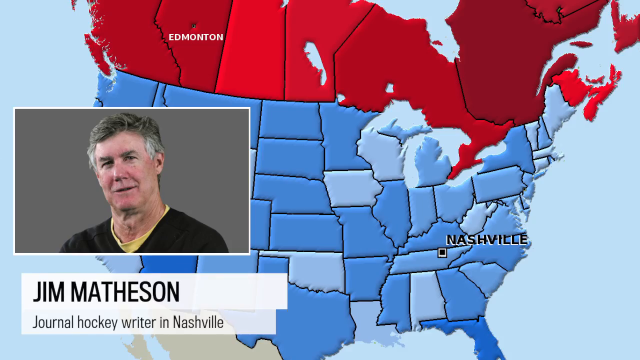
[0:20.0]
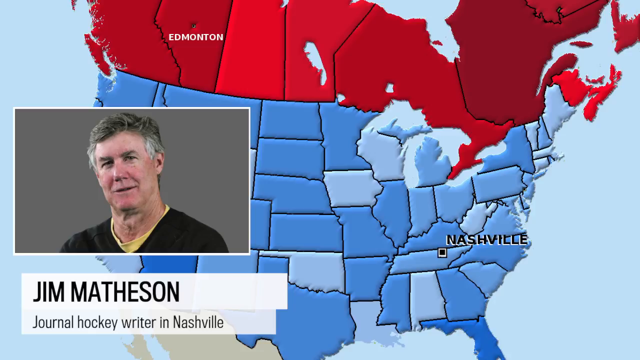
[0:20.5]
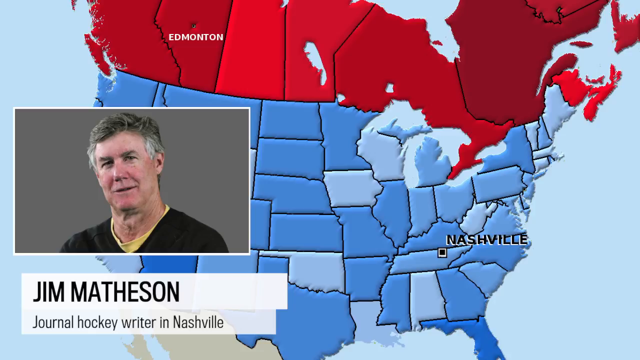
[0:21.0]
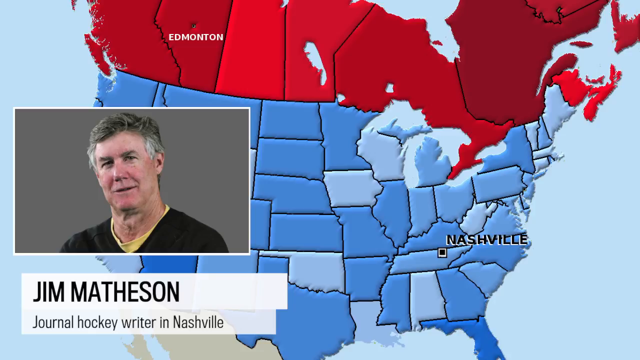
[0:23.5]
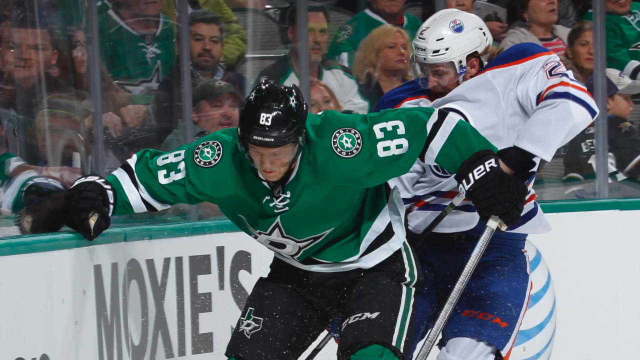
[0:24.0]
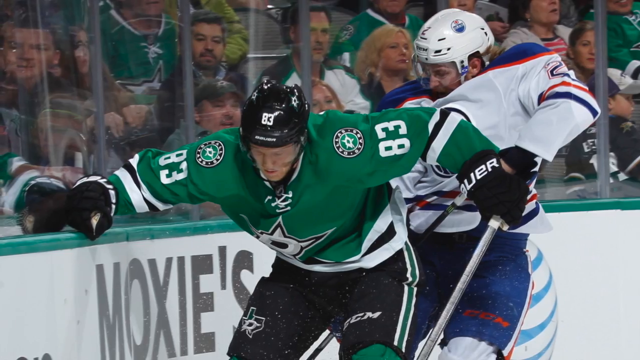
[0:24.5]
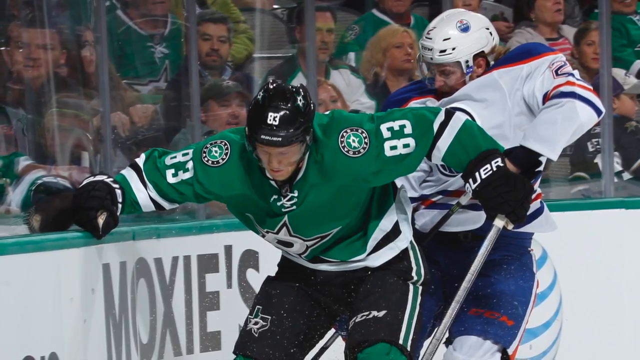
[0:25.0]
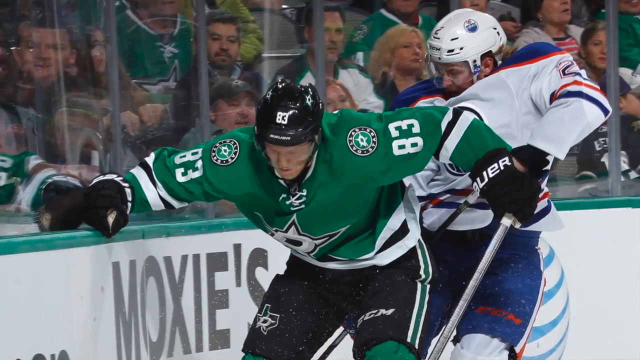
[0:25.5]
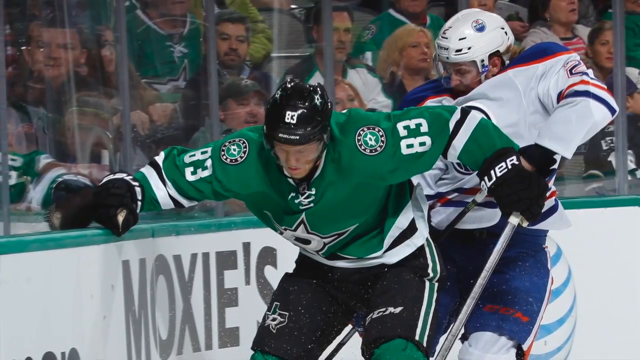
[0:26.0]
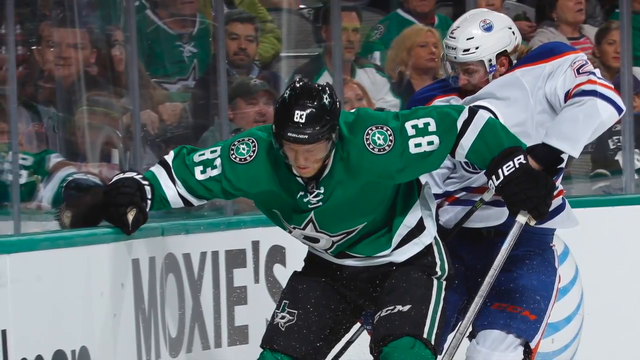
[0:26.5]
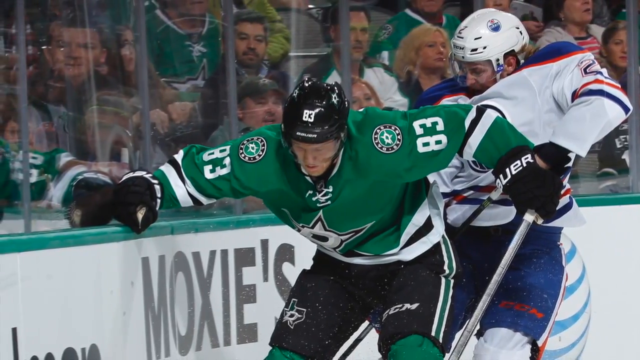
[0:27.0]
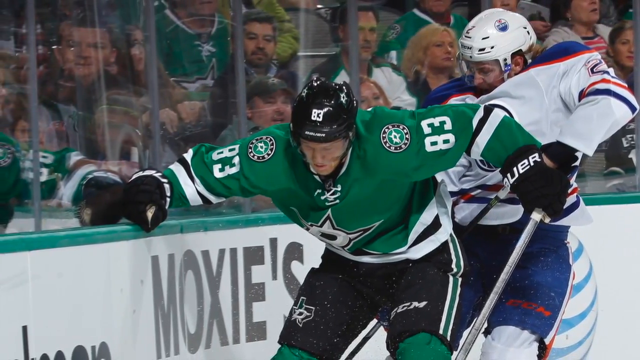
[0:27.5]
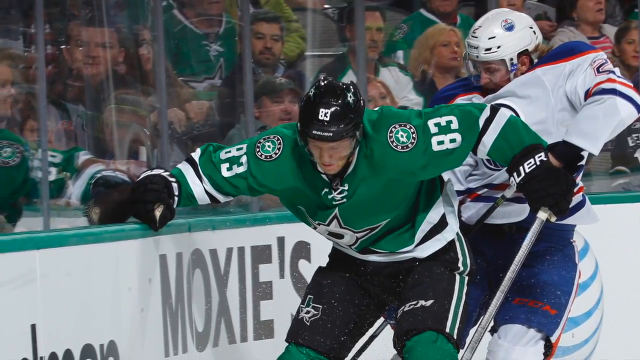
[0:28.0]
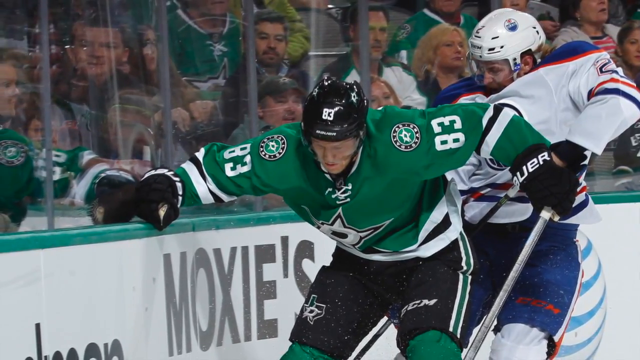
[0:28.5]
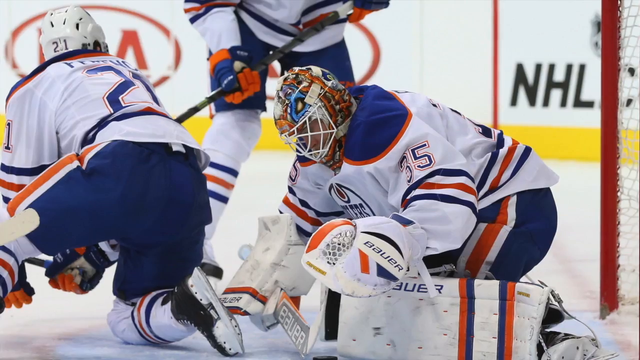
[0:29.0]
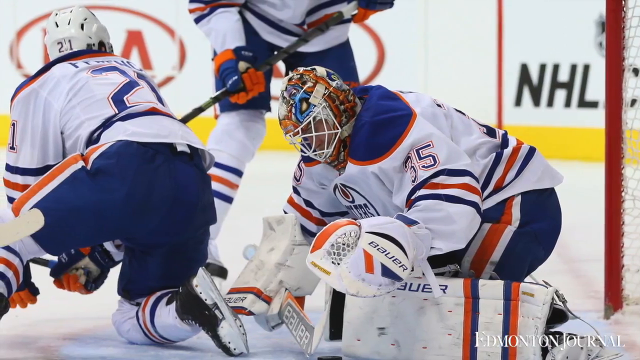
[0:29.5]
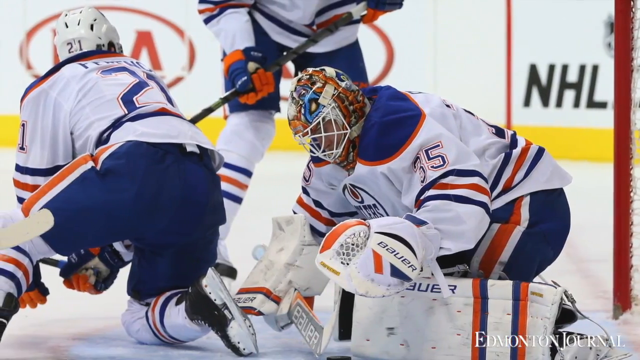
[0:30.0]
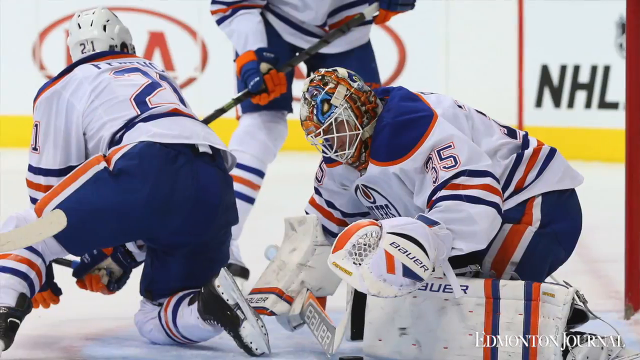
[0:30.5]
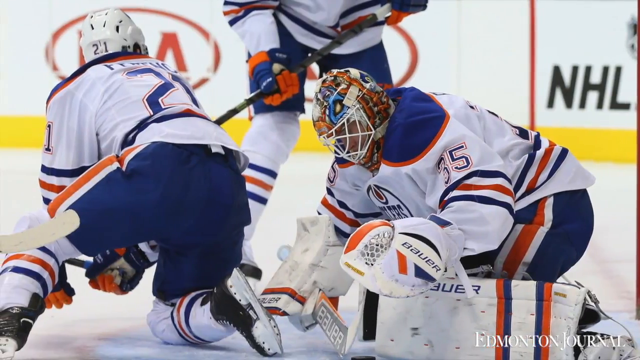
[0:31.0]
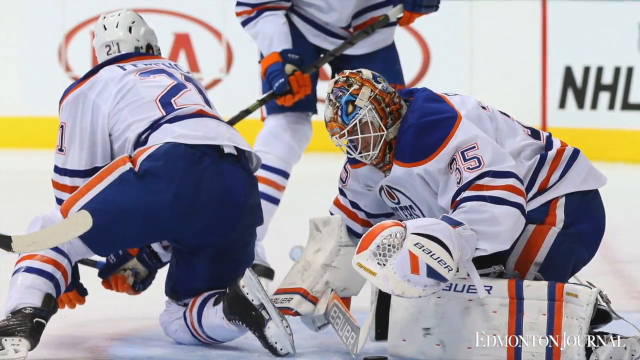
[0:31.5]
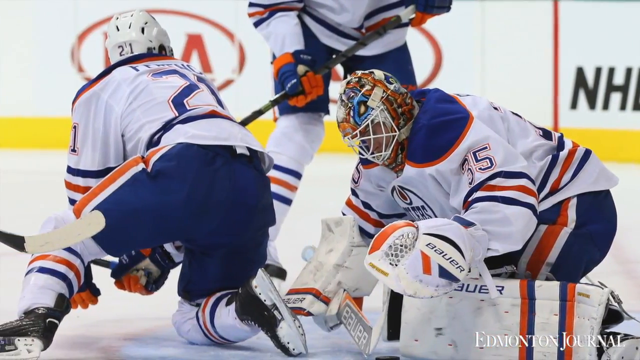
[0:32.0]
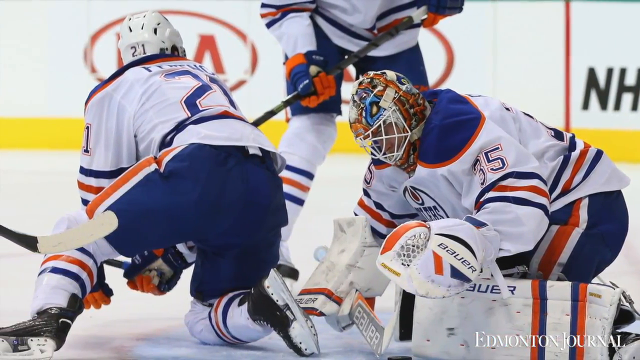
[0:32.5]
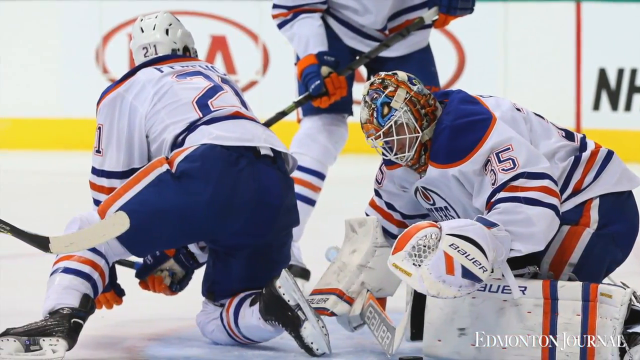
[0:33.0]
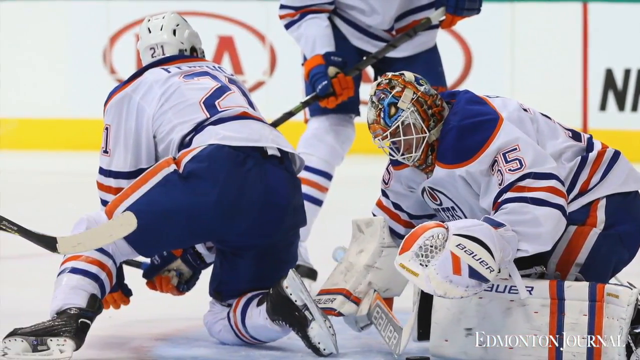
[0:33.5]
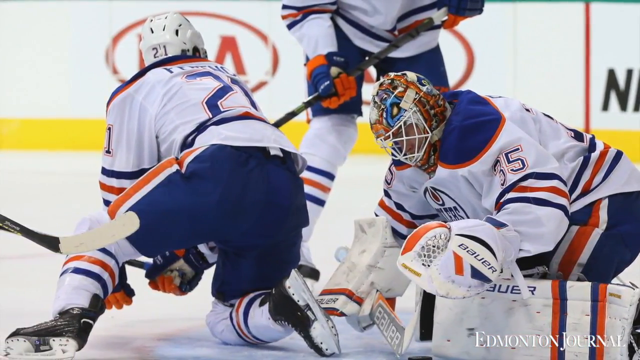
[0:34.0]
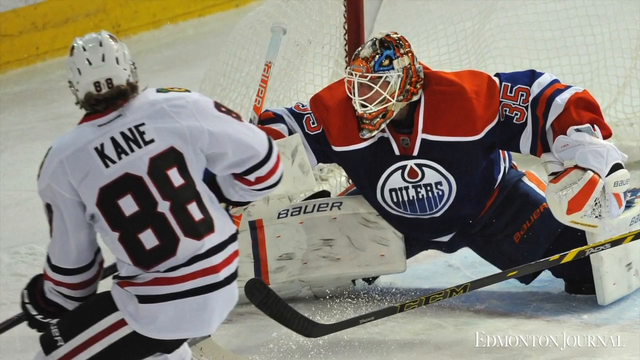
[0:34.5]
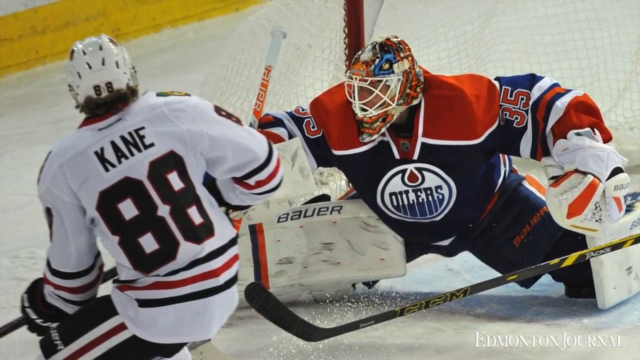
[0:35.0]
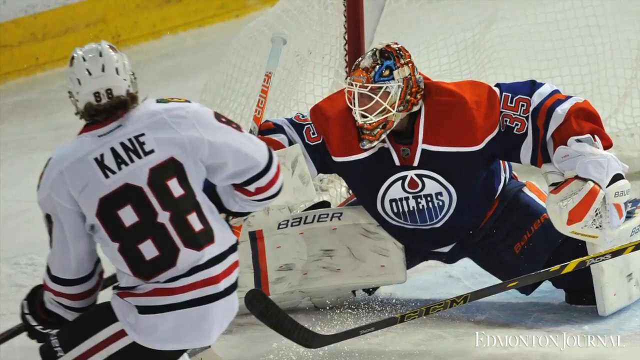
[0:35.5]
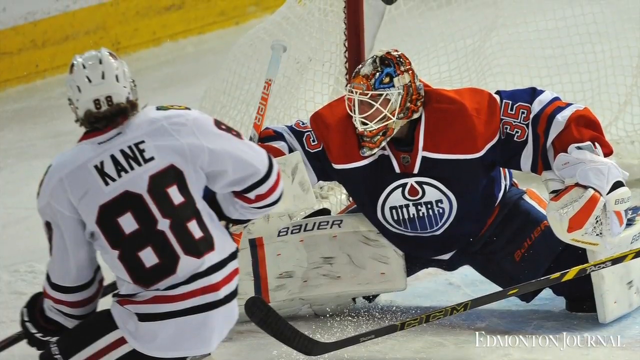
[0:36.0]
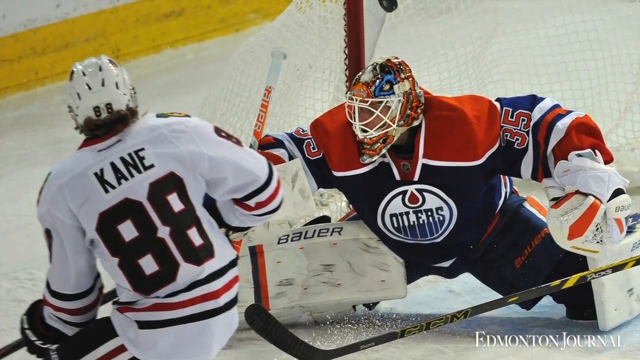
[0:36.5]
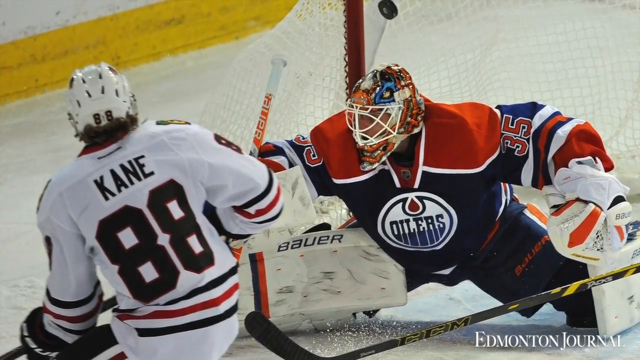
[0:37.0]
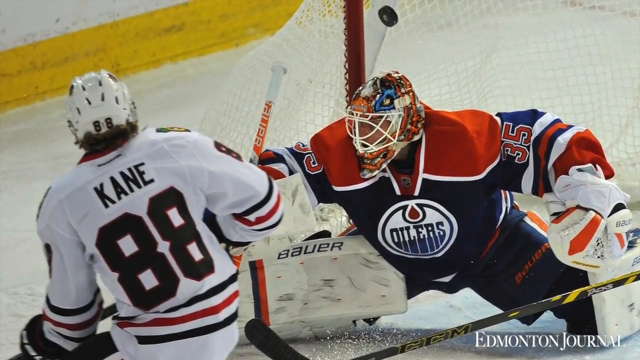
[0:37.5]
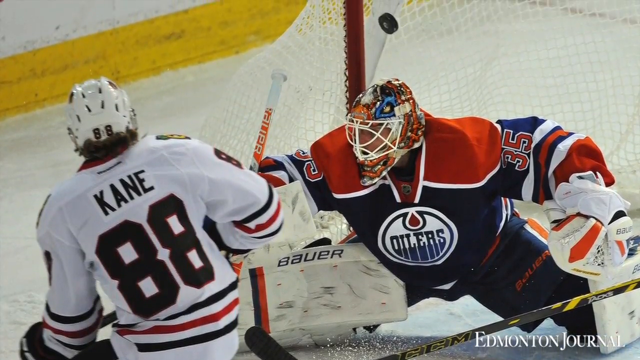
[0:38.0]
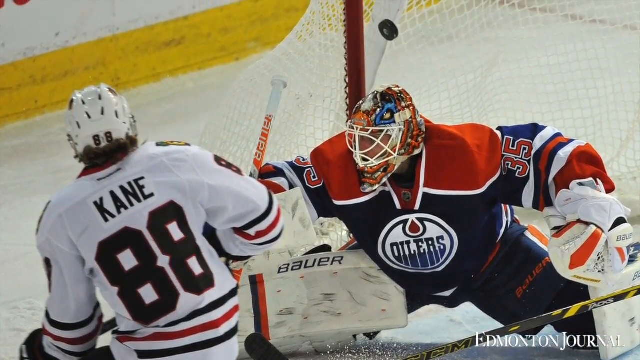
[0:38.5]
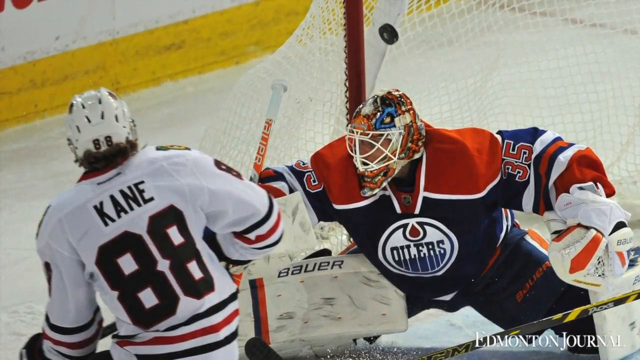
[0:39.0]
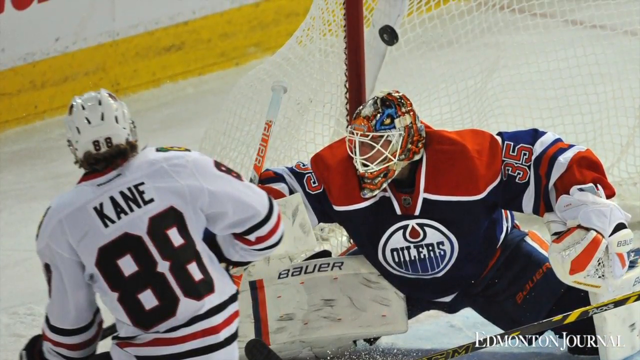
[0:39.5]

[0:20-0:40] The picture of Jim Matheson is on the left side, and at the bottom the text says "Journal Hockey Writer in Nashville". In the background is a very large map of the United States and Canada; the United States is light blue and Canada is red. Nashville is labeled on the US and Edmonton is labeled on Canada. The scene changes to two hockey players fighting for possession of the puck up against the wall. The one on the right plays for the Oilers; the one on the left plays for the Dallas Stars and wears number 83. Both look downward as they fight for the puck. The Oilers player is behind the Dallas player, who has his right hand against the plexiglass. The scene changes to an Oilers goalie, number 35, on the ground on the ice on the right side, looking like he is trying to make a save, with two other Oilers players to the left. Another image shows the Oilers goalie, number 35, on the right side, looking like he is making a save. A player from another team, number 88, with the last name Kane, is on the left with his back visible. The view shifts upward, revealing a puck above the goalie's head going into the net. The scene changes.